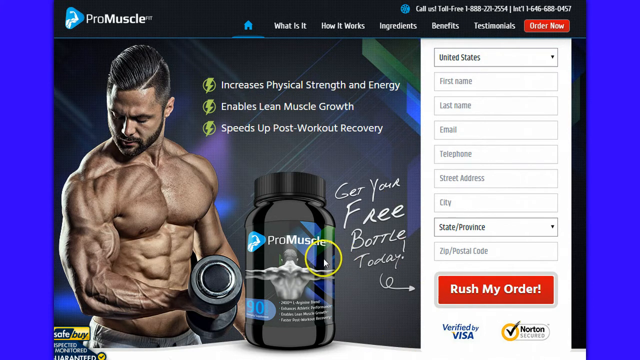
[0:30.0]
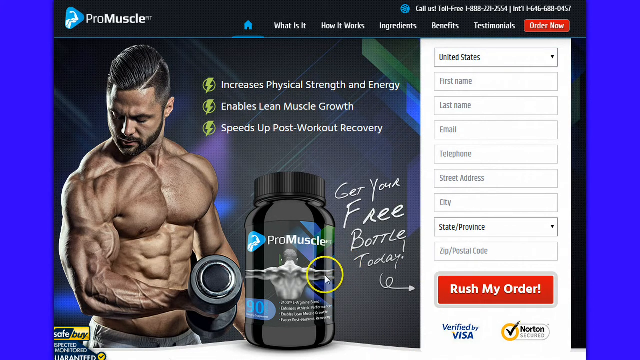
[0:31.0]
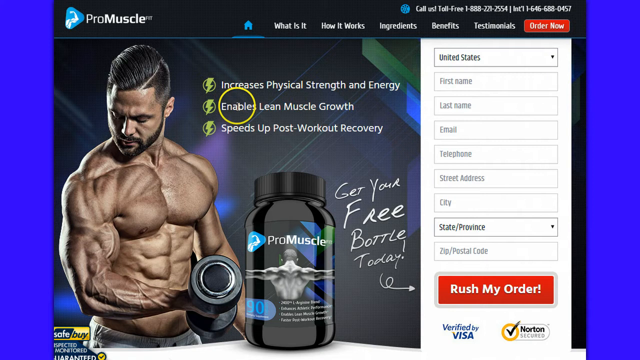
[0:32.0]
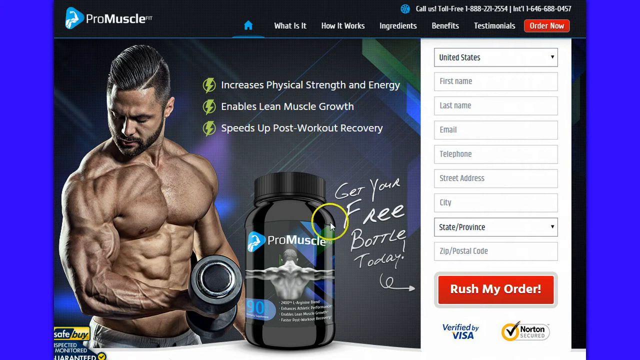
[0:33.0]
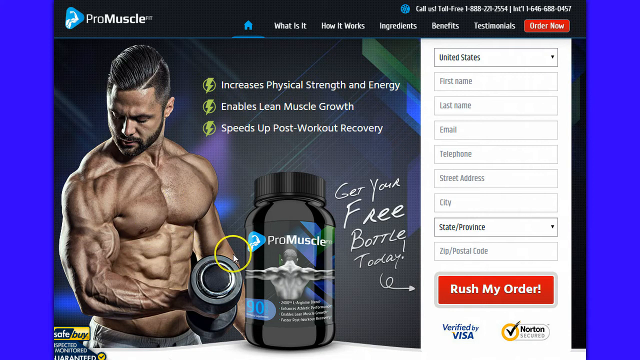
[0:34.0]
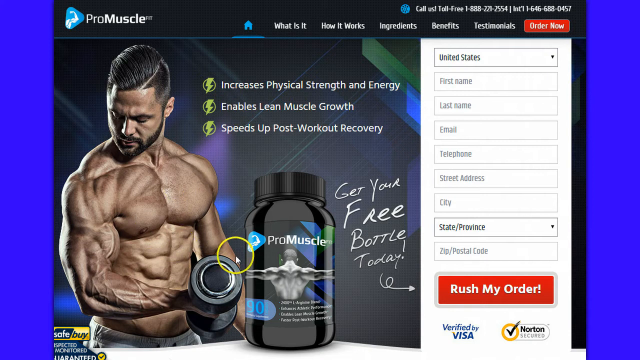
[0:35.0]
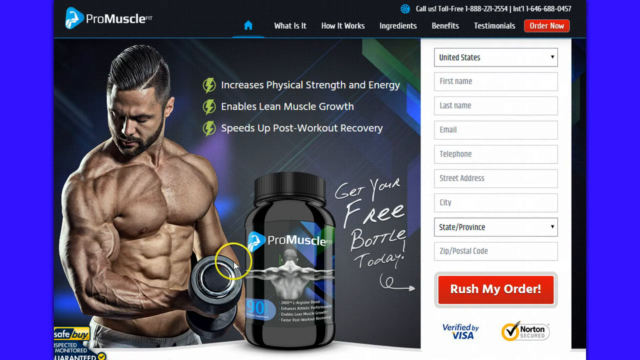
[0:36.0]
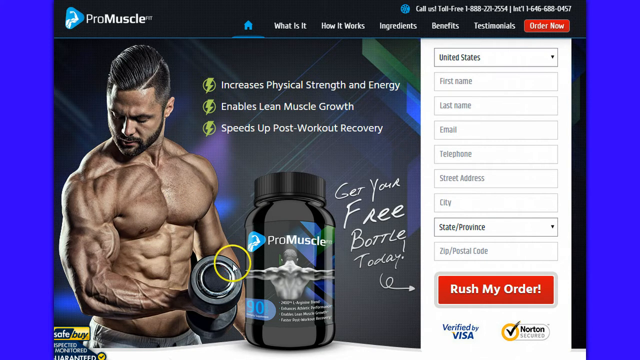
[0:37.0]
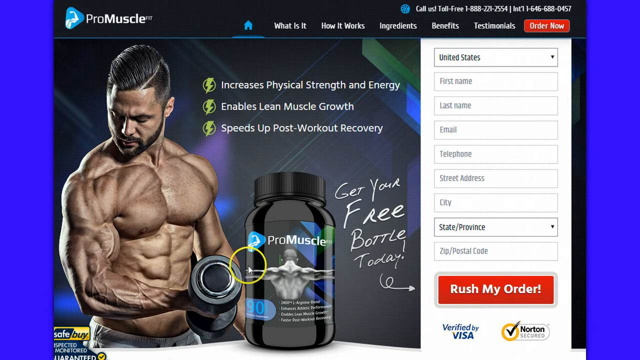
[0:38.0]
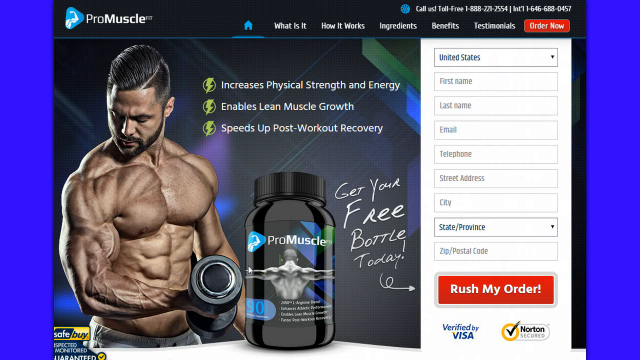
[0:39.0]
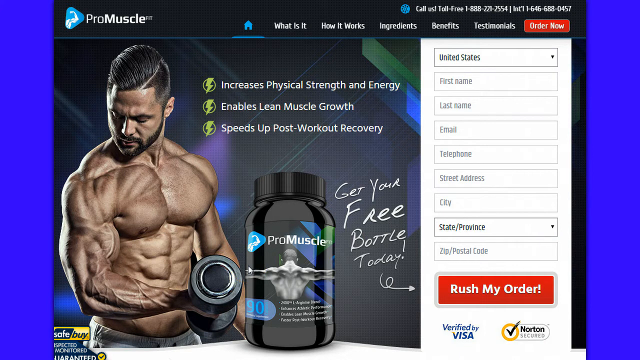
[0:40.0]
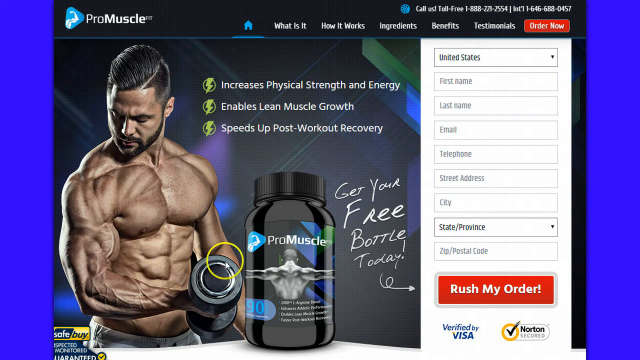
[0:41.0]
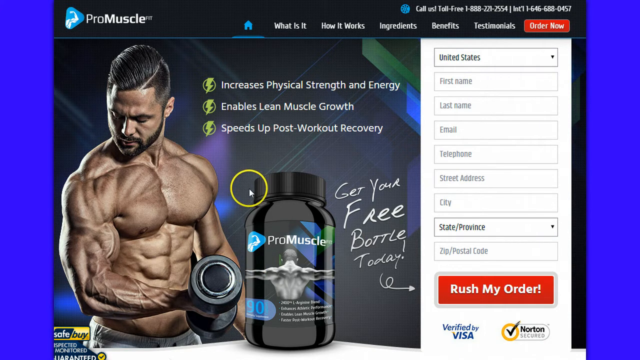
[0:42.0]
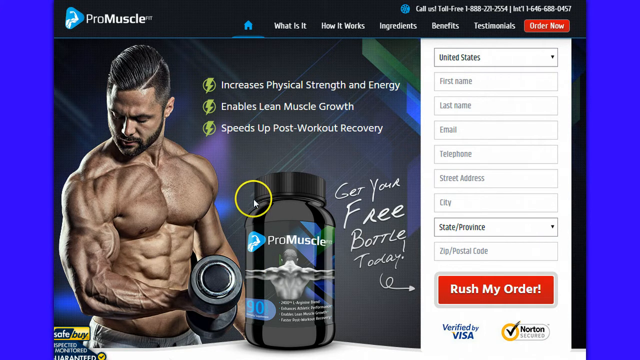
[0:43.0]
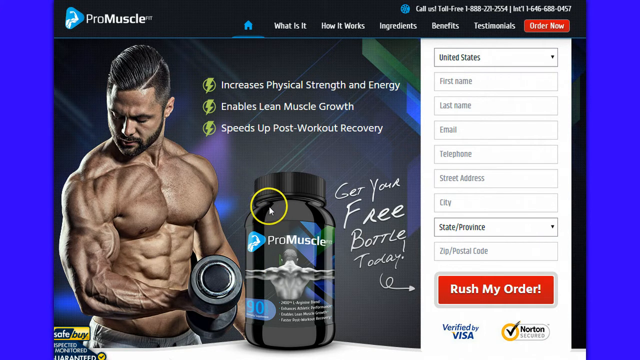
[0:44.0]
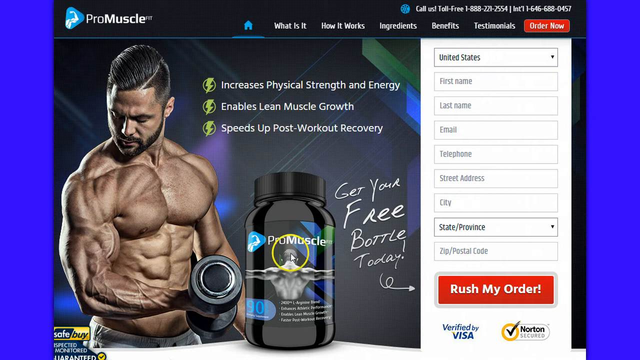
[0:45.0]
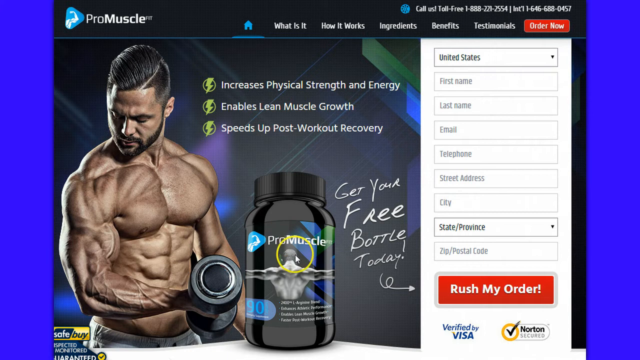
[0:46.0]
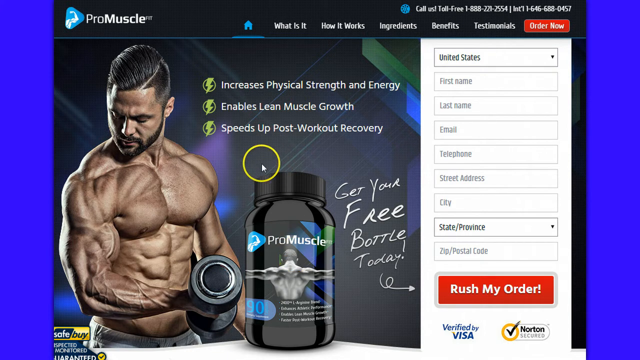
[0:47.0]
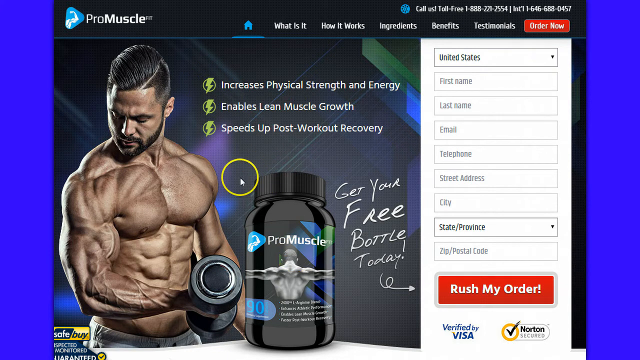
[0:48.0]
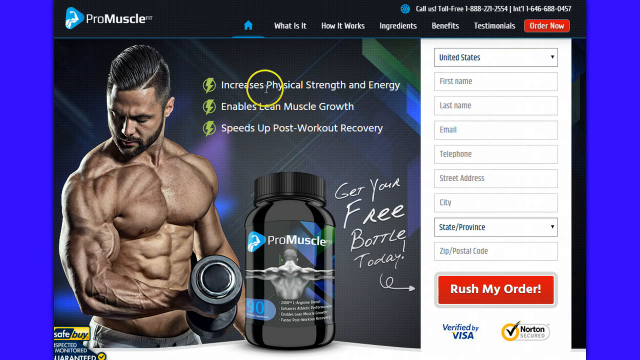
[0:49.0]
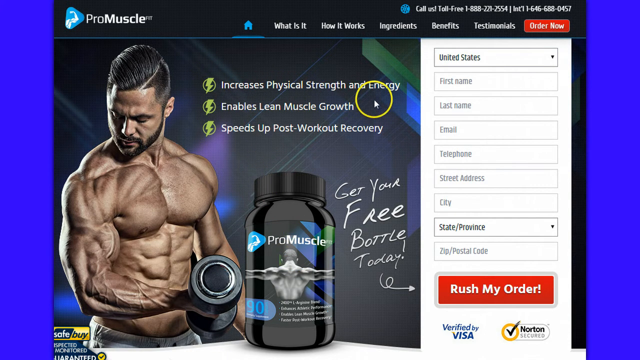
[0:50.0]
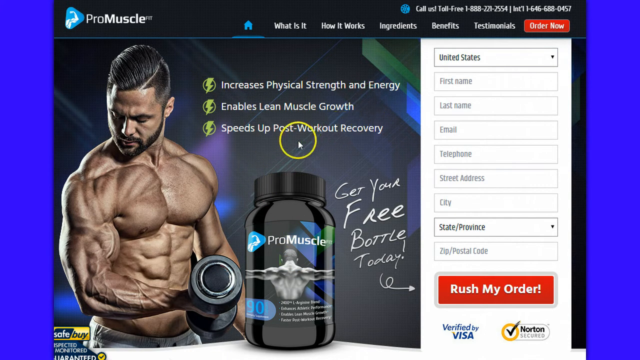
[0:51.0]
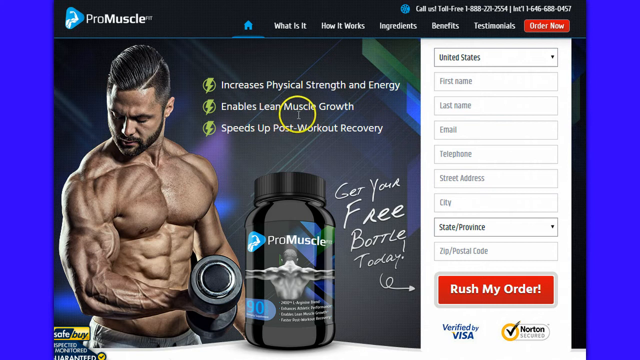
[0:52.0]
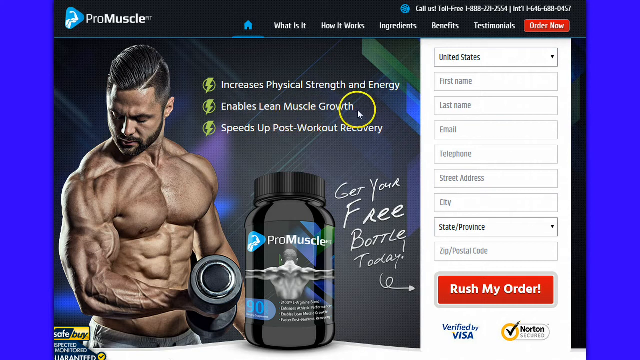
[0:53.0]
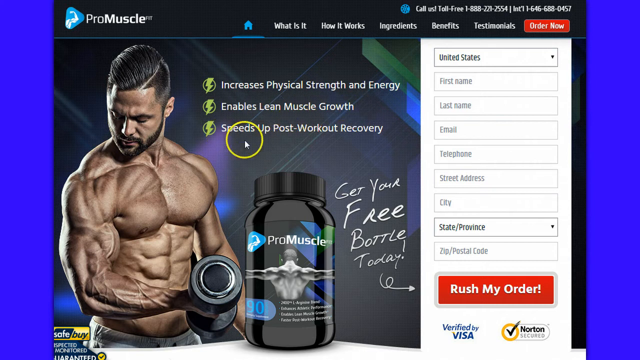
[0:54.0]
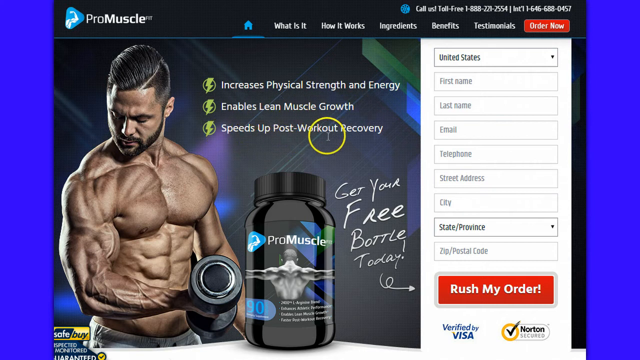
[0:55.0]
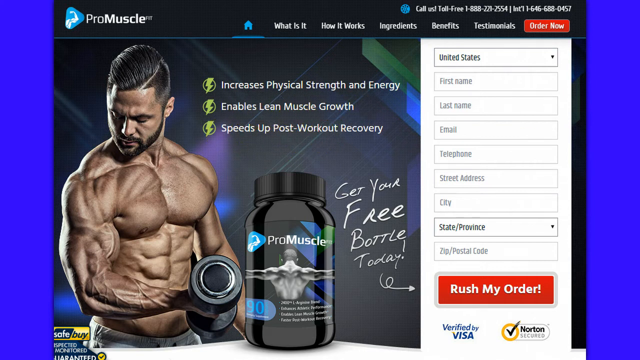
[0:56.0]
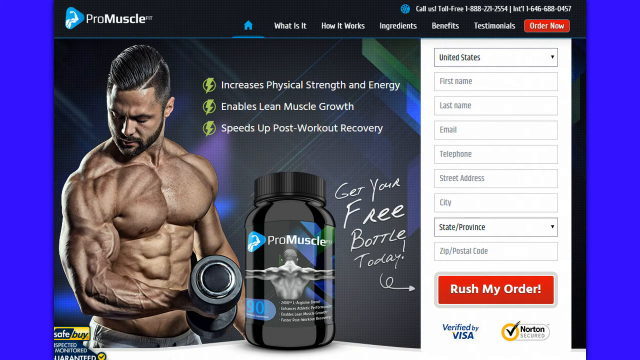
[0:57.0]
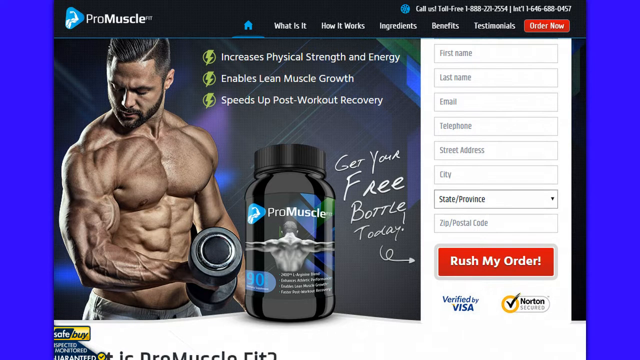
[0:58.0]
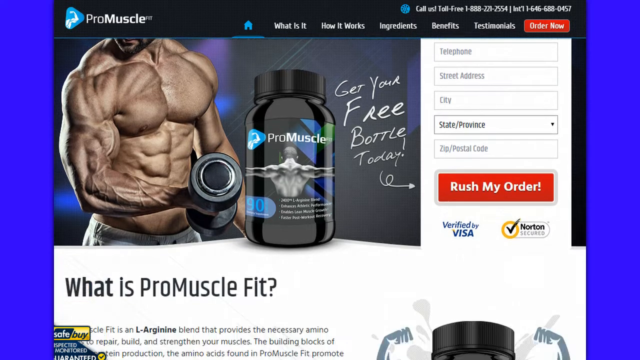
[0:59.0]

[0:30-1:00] An ad for a product called Pro Muscle is up on a computer. The person moves a cursor surrounded by a yellow circle that makes it easier to see. The cursor moves up and rests, more or less, on a jar of pills, then moves across some of the words at the top about the benefits of using the product before moving to another area. As the page scrolls down, it reads "what is Pro Muscle Fit." The middle area says "get your free bottle today," with a clickable section reading "rush my order." The bottom portion says "verified by Visa," and there is a check mark in a yellow circle with the words "Norton secured."